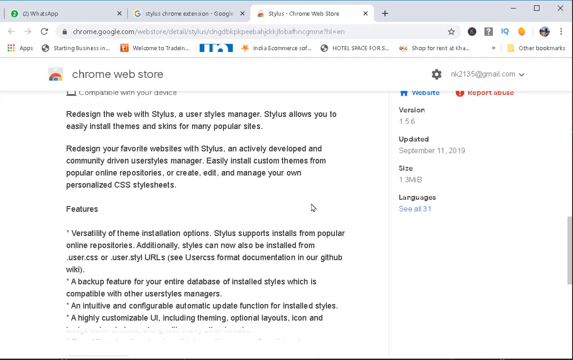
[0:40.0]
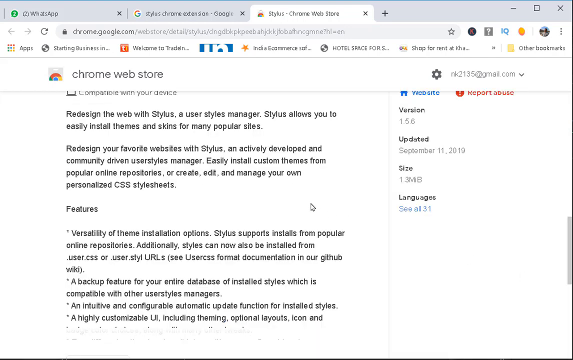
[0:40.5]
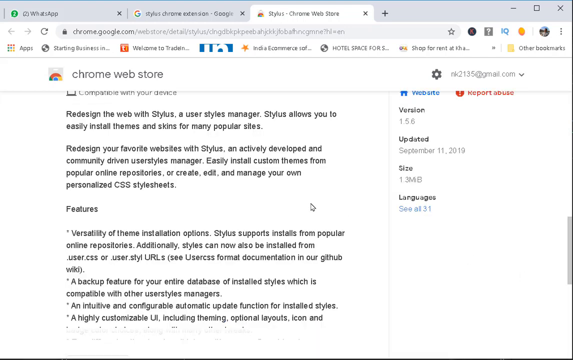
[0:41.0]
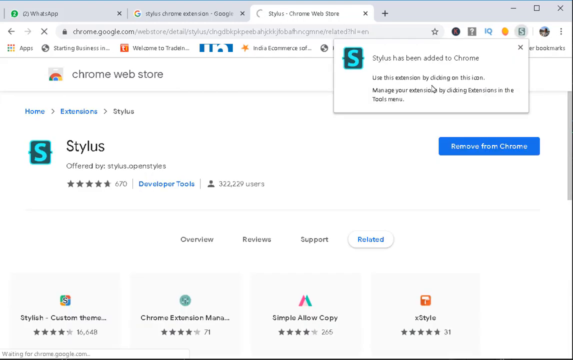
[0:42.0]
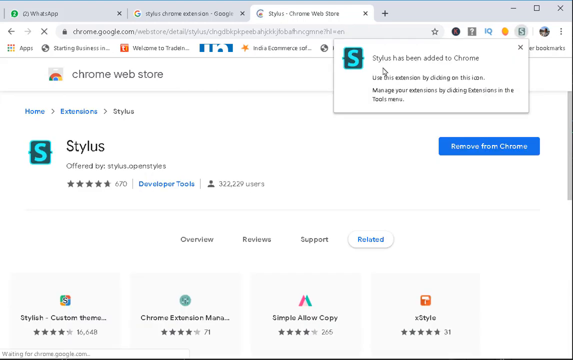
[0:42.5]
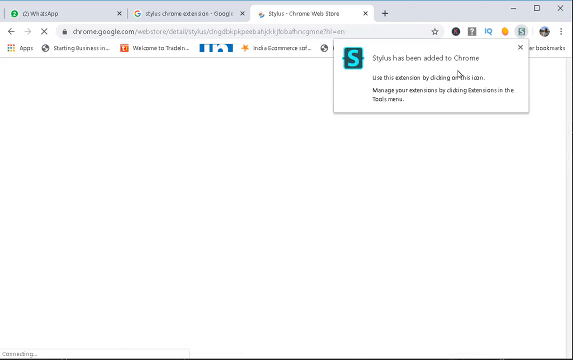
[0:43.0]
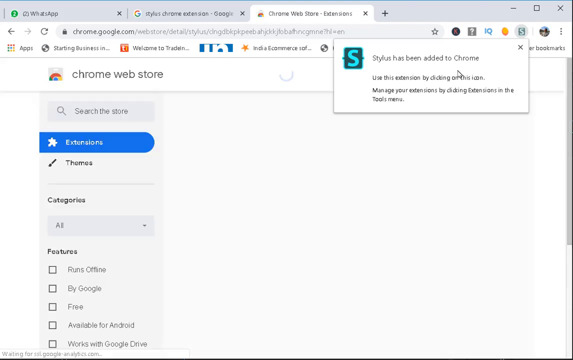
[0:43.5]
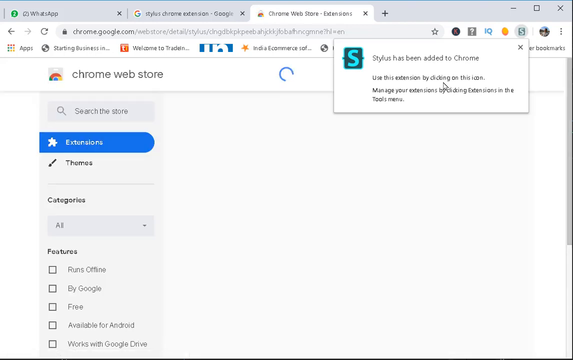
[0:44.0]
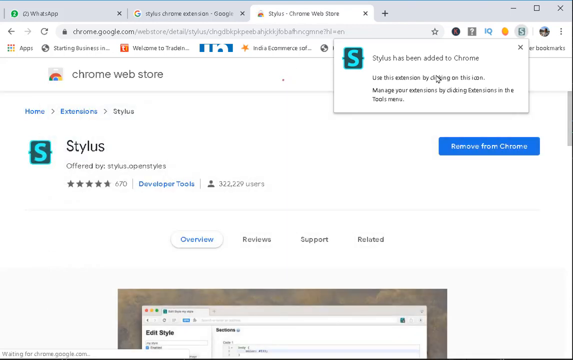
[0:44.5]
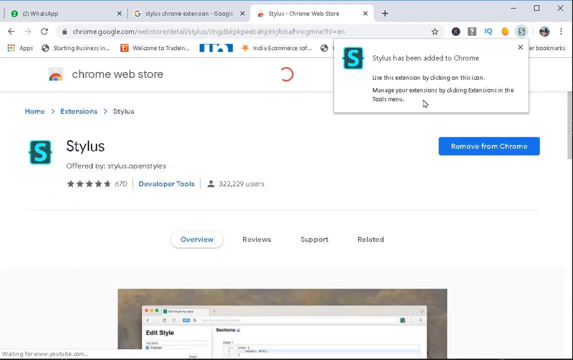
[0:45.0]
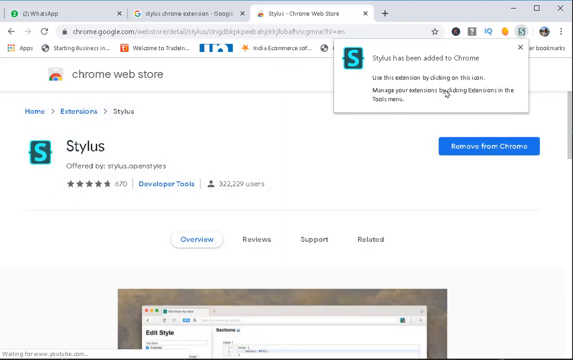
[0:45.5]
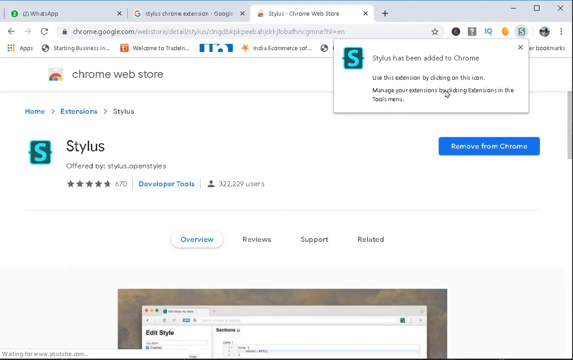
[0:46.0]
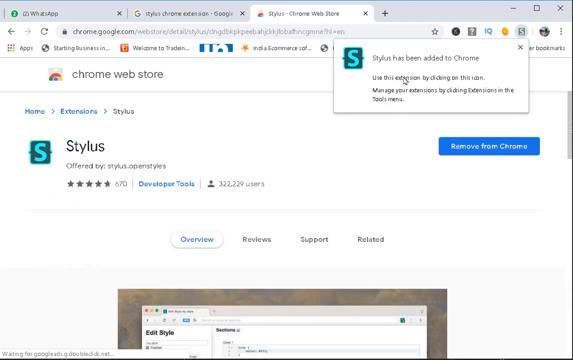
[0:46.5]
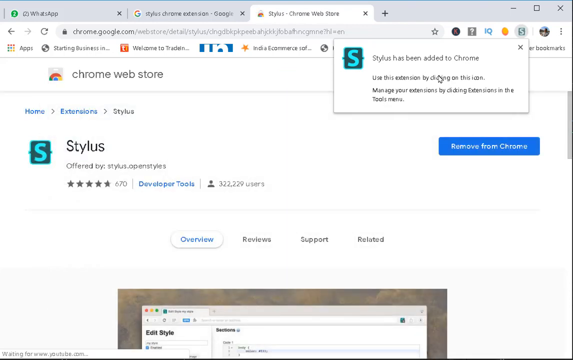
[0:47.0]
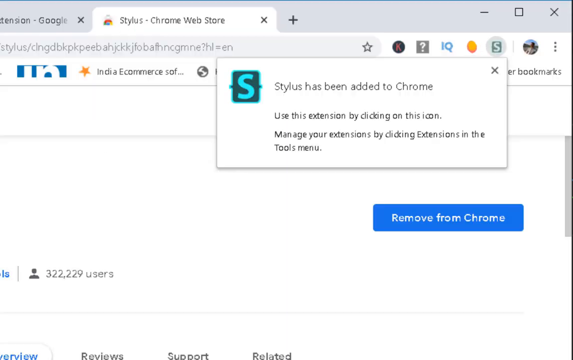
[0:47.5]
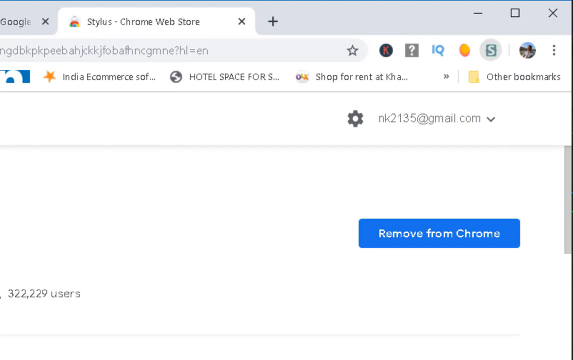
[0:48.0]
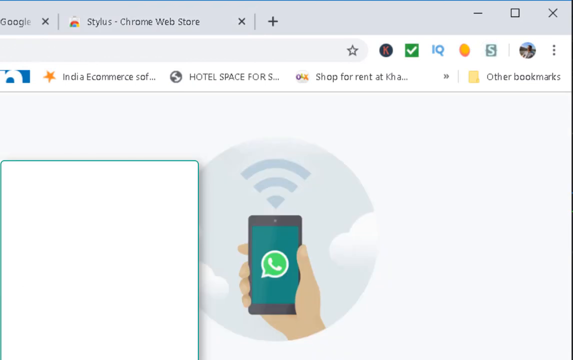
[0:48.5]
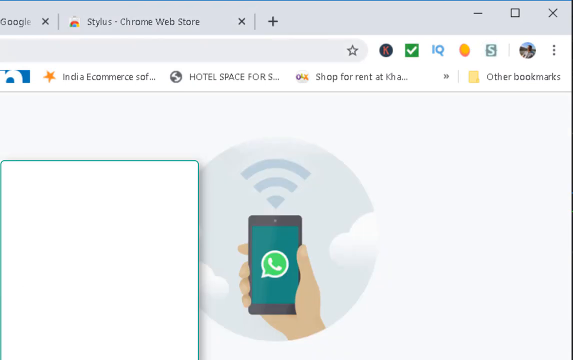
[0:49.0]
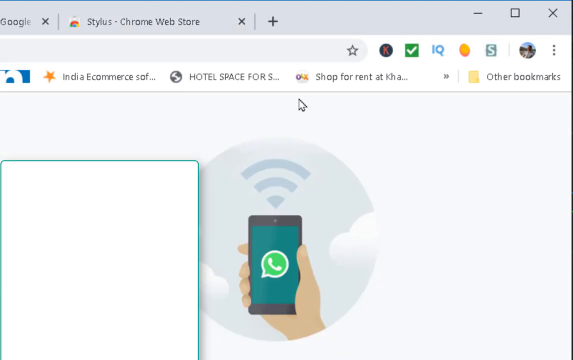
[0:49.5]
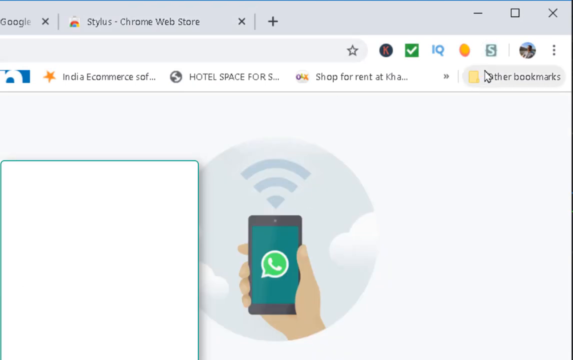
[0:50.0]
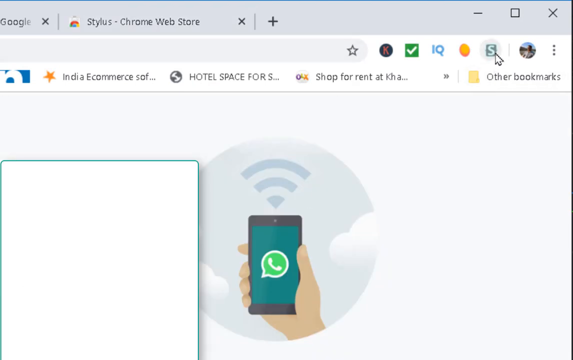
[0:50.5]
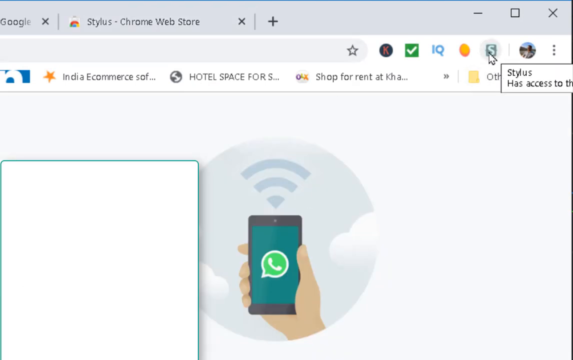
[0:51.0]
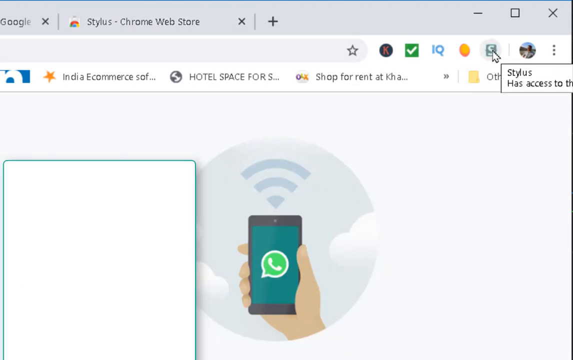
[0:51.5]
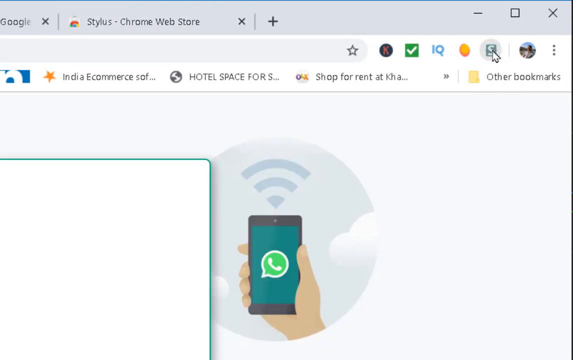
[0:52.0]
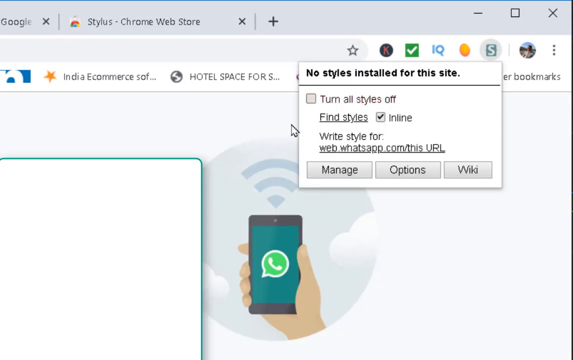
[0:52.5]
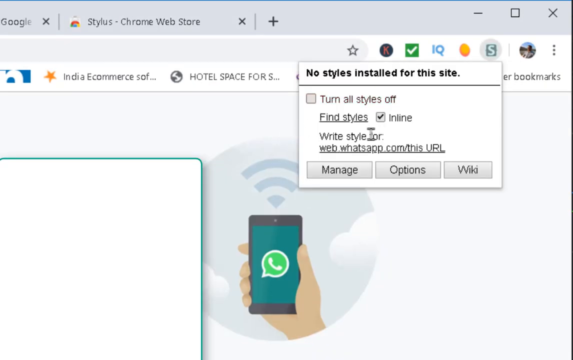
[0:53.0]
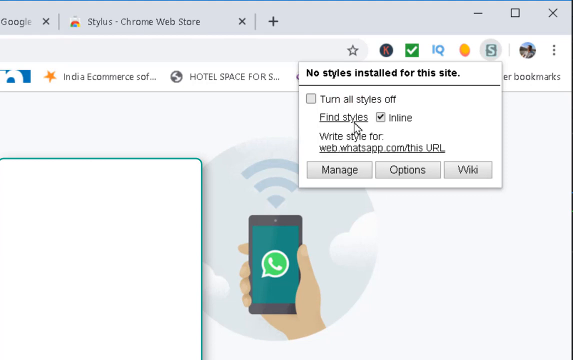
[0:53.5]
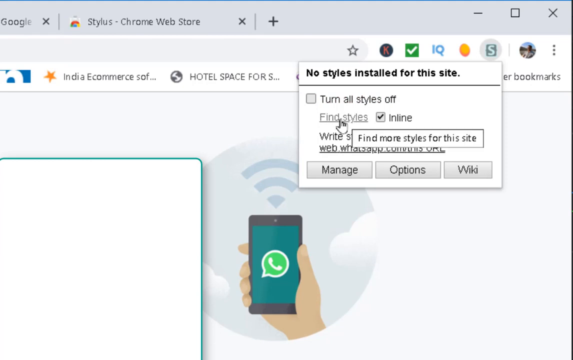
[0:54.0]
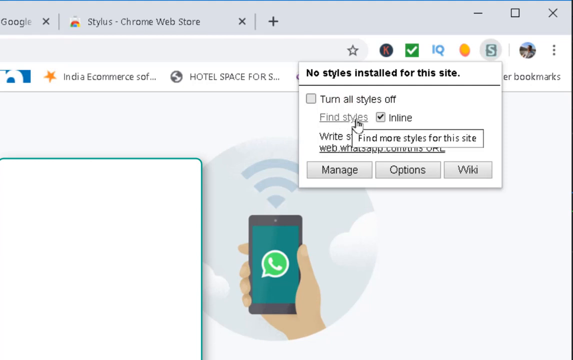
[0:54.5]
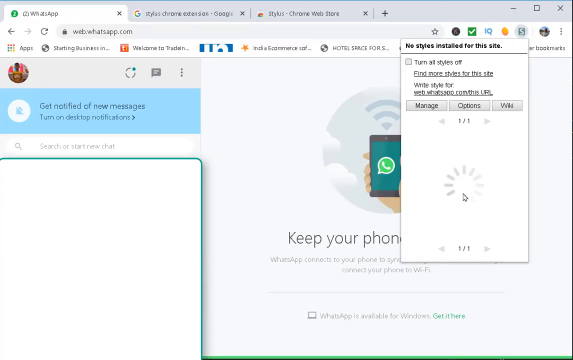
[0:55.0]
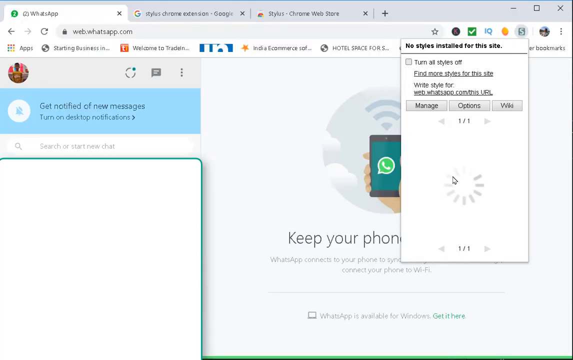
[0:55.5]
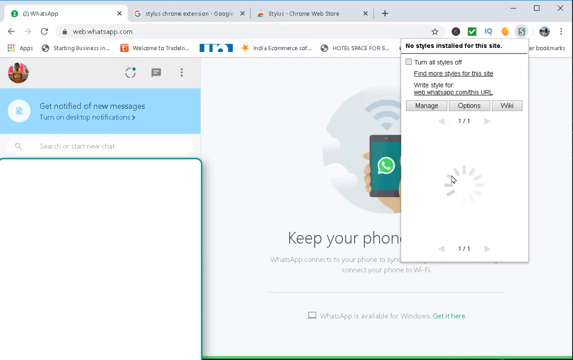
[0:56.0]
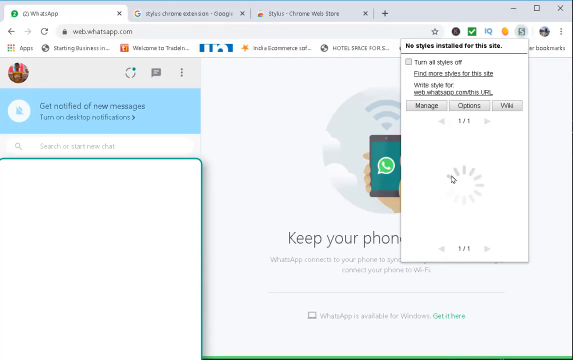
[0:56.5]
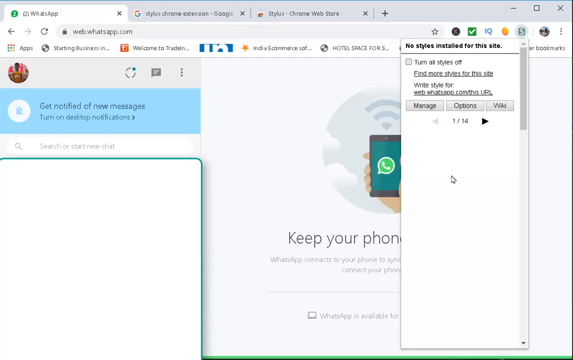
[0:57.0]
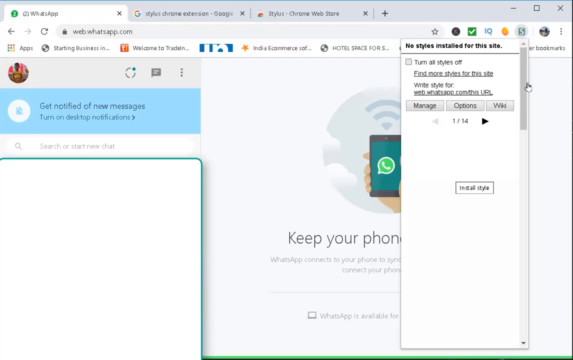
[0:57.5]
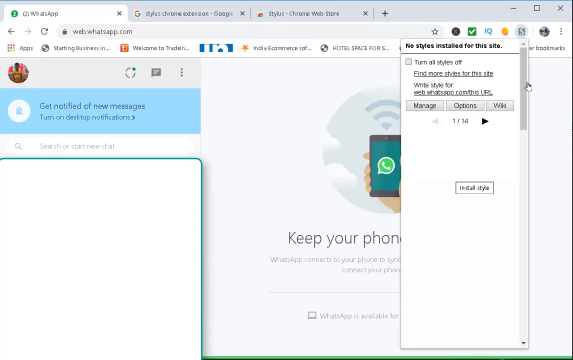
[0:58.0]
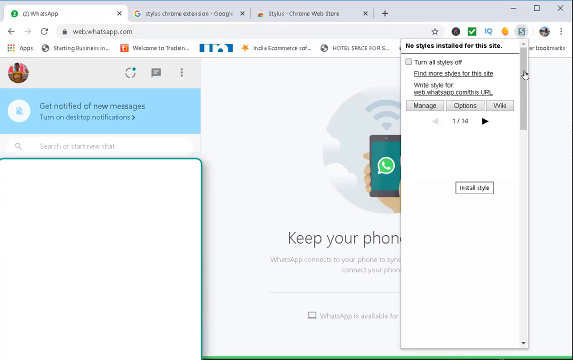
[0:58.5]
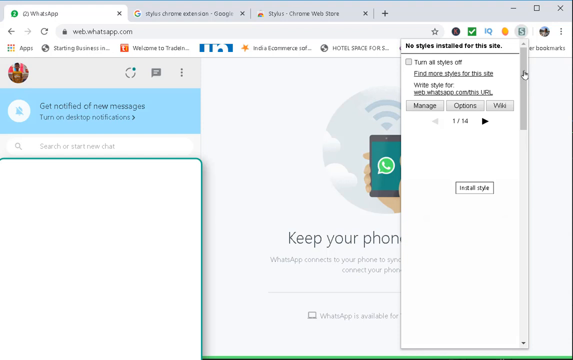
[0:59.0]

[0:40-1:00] Stylus has now been added to Chrome, and a message reads "use this extension by clicking this icon" and "manage your extensions by clicking extensions in the tools menu." The Stylus logo among the extensions is clicked, opening a panel that says "no styles installed for this site" with options to turn all sites off, "find styles", and "write styles for web.whatsapp.com." The view then returns to the feature description on the Stylus page, which covers how to install and add styles.